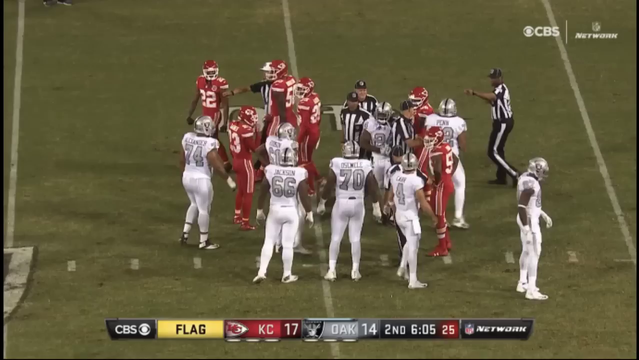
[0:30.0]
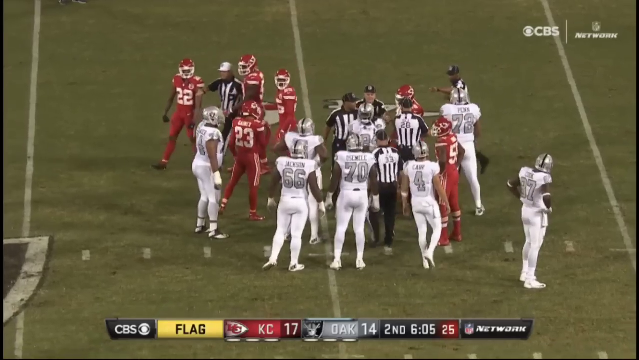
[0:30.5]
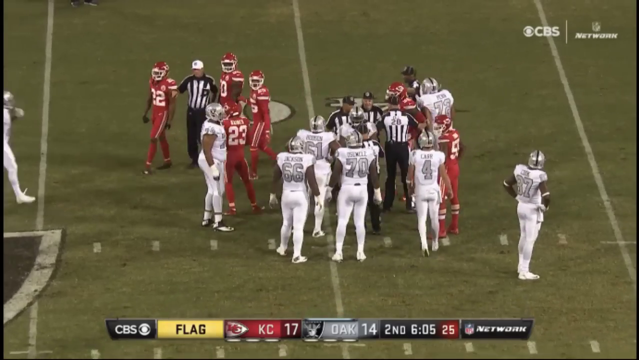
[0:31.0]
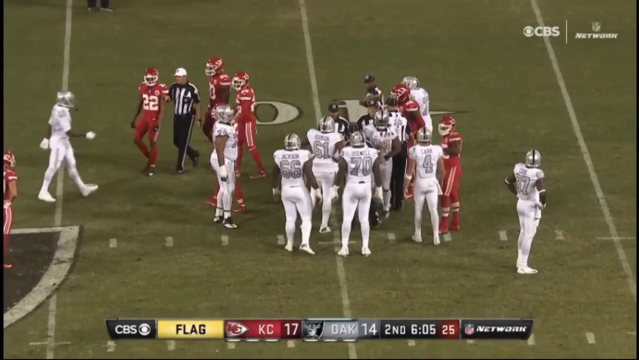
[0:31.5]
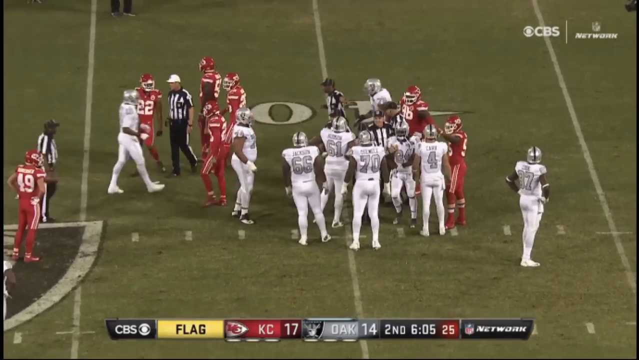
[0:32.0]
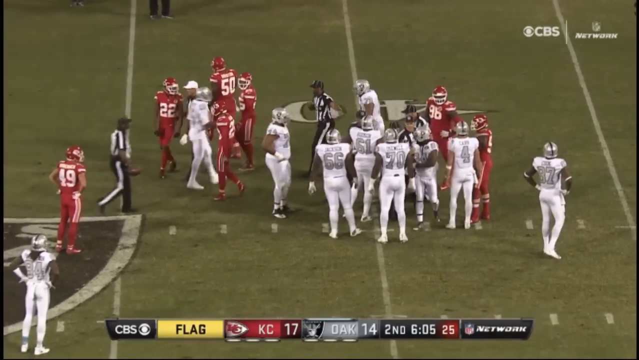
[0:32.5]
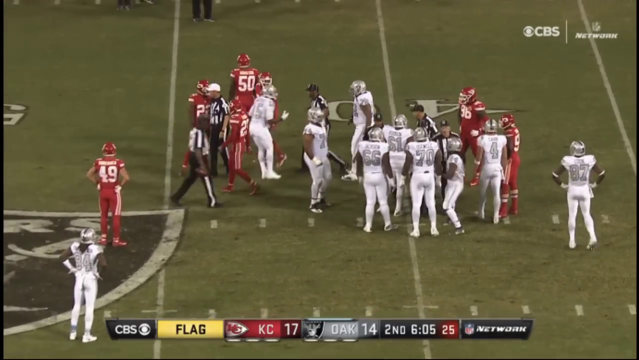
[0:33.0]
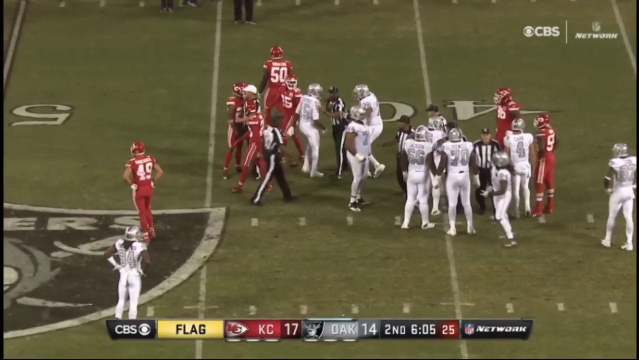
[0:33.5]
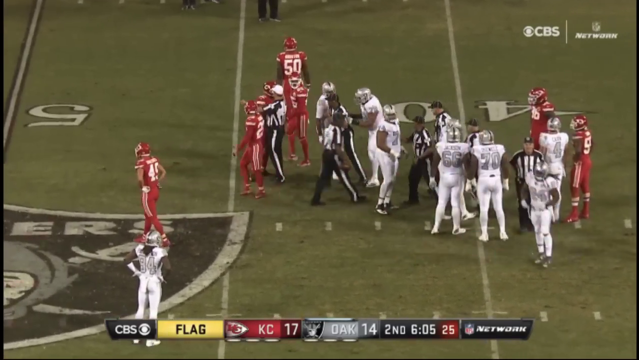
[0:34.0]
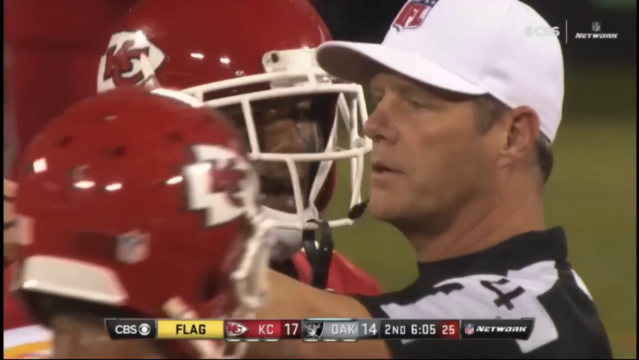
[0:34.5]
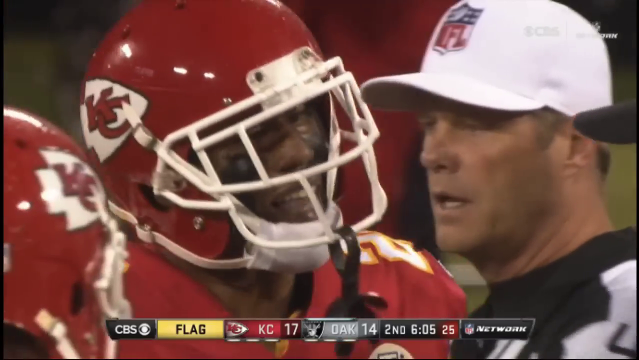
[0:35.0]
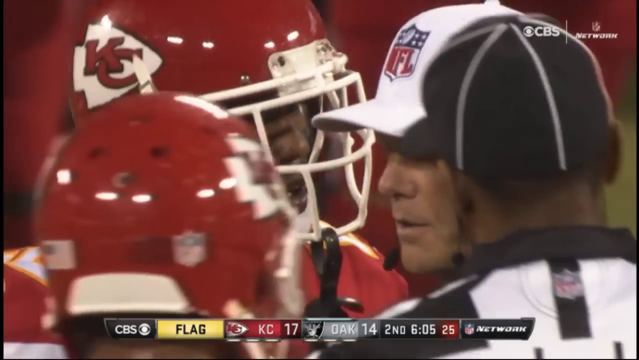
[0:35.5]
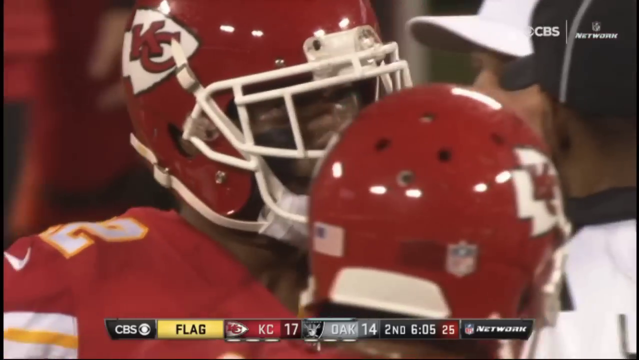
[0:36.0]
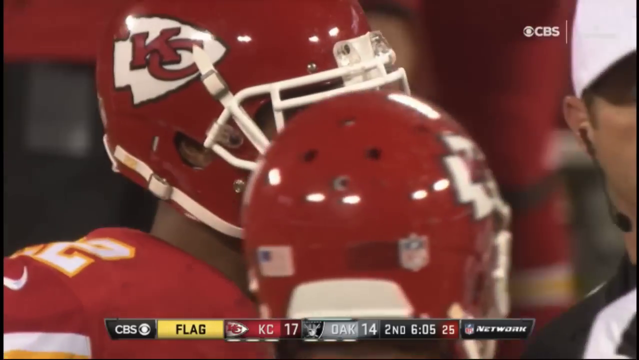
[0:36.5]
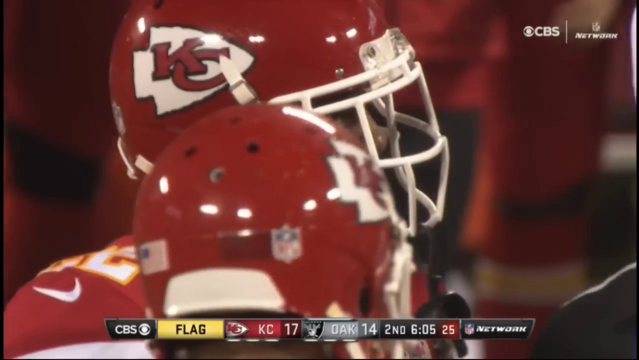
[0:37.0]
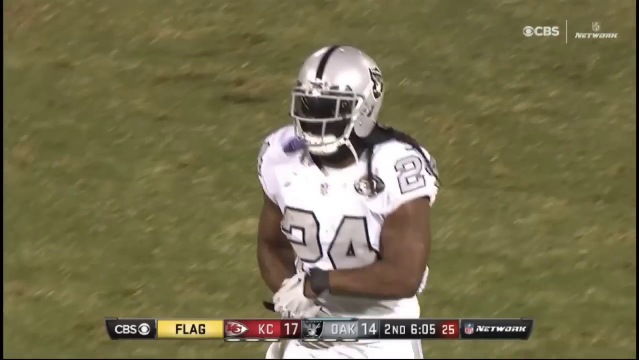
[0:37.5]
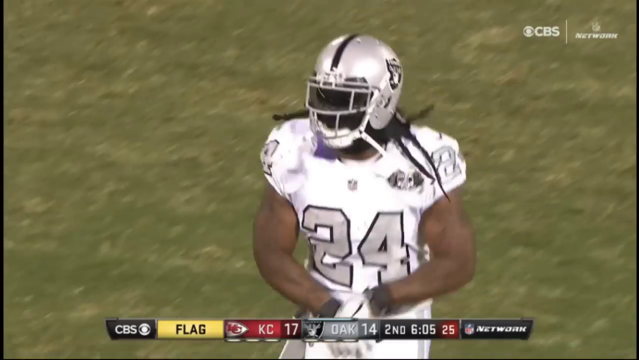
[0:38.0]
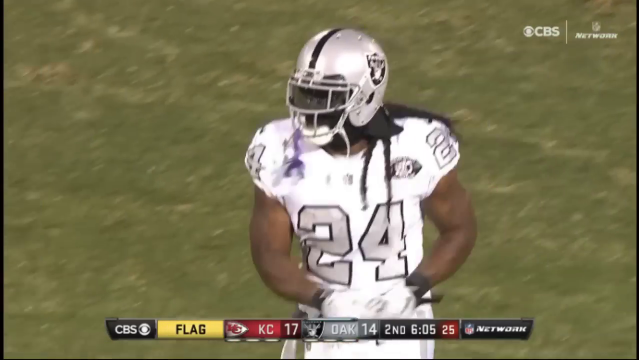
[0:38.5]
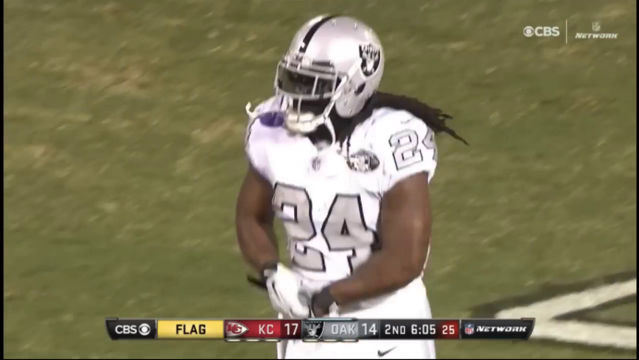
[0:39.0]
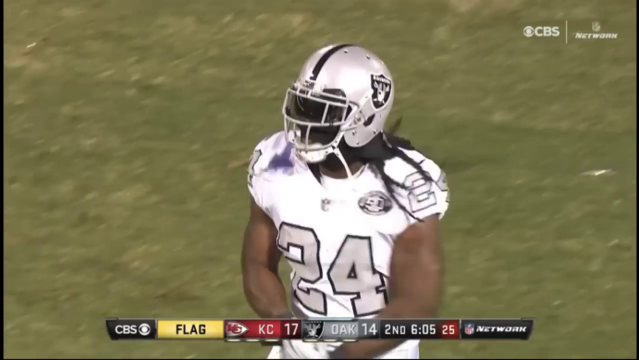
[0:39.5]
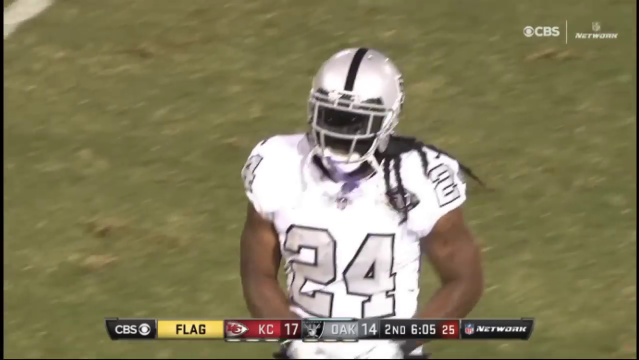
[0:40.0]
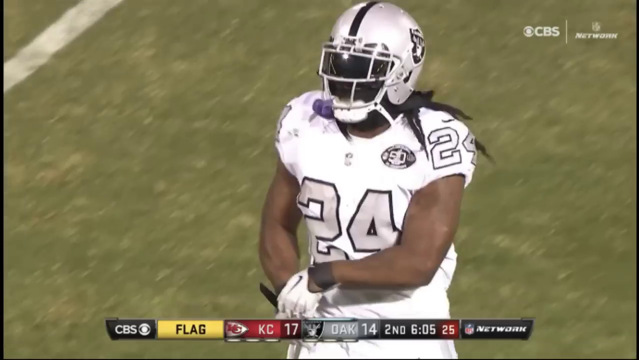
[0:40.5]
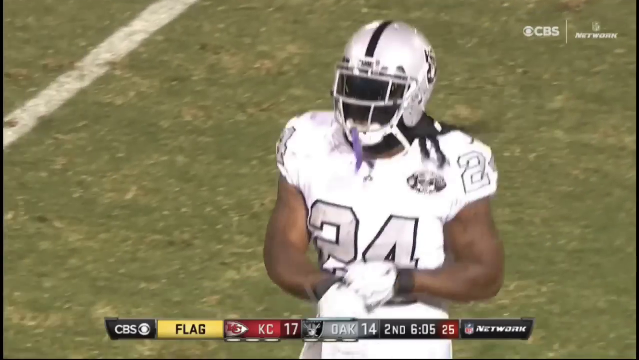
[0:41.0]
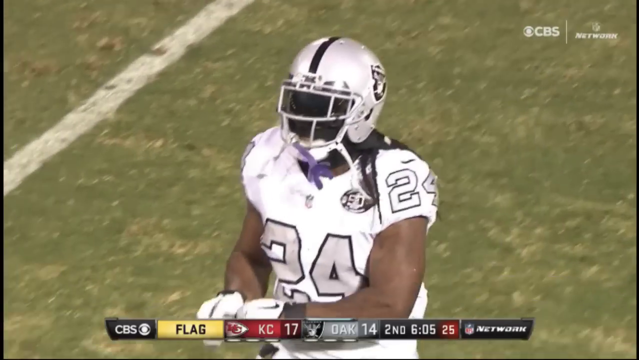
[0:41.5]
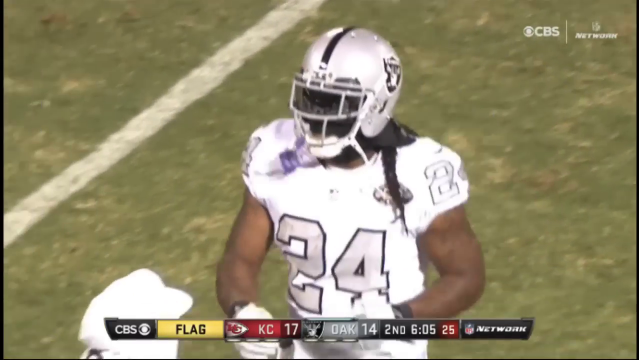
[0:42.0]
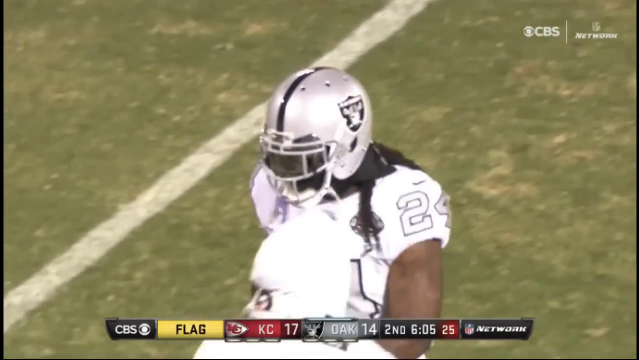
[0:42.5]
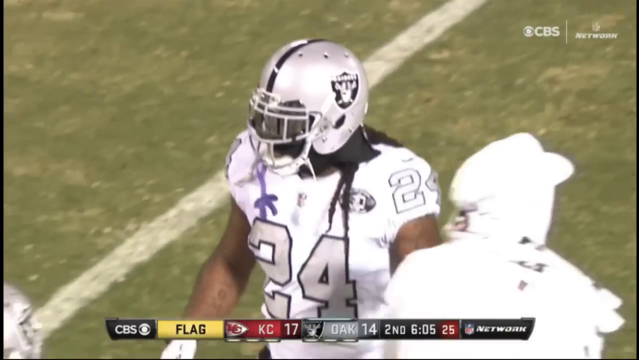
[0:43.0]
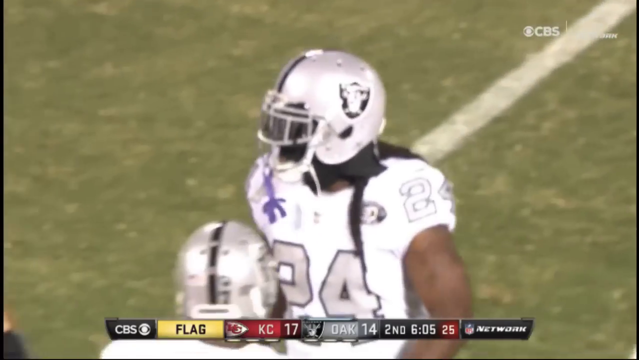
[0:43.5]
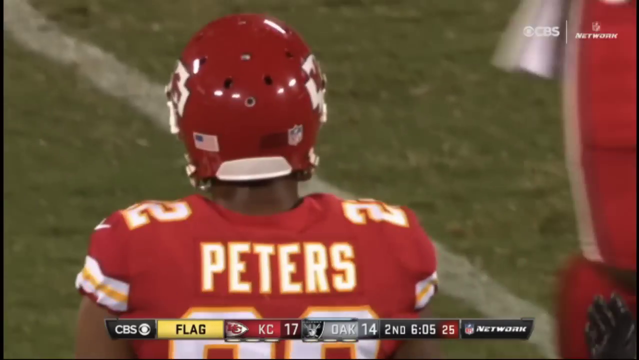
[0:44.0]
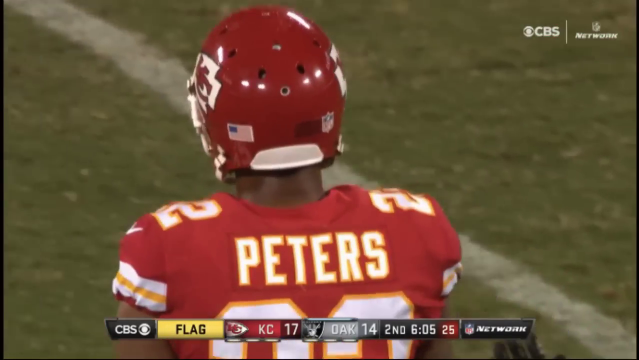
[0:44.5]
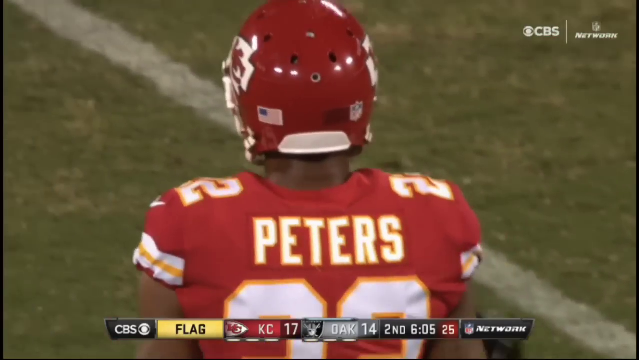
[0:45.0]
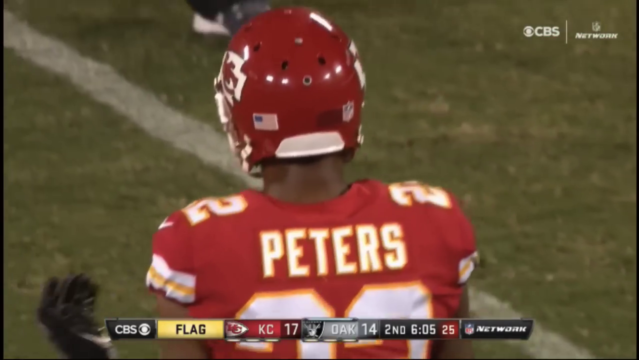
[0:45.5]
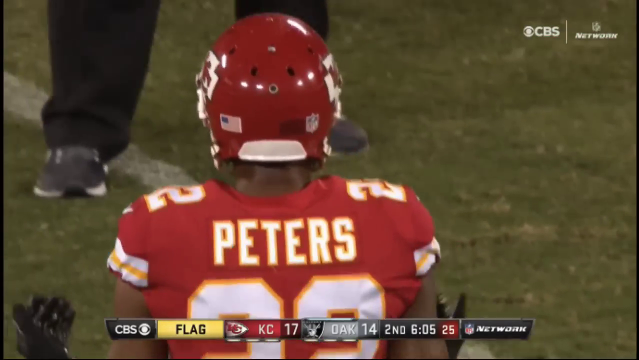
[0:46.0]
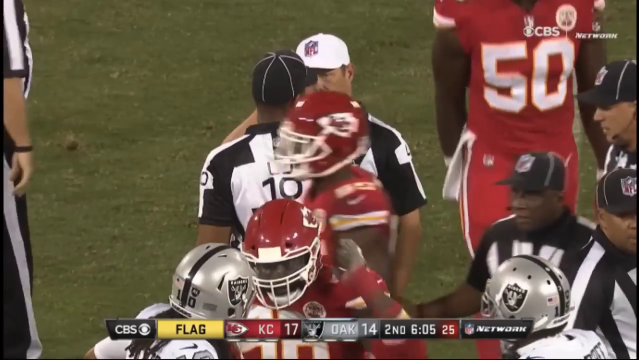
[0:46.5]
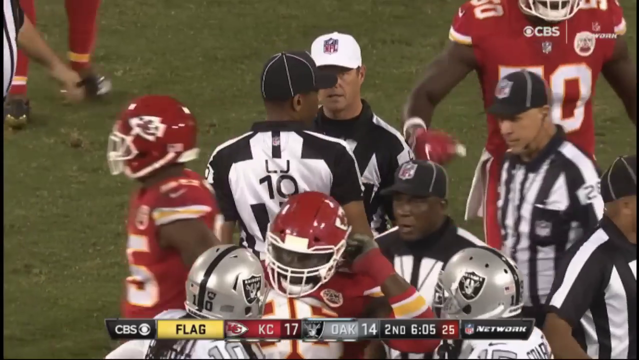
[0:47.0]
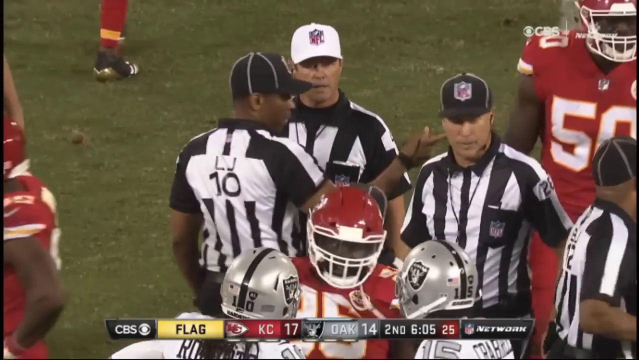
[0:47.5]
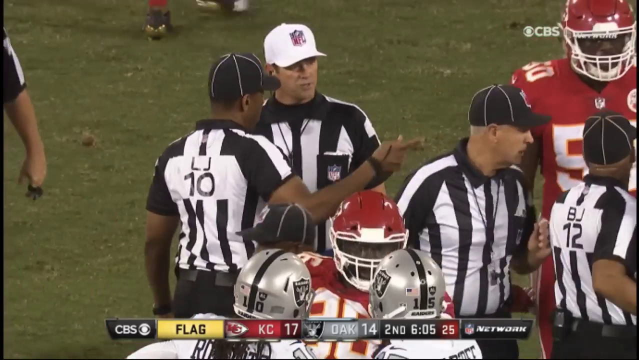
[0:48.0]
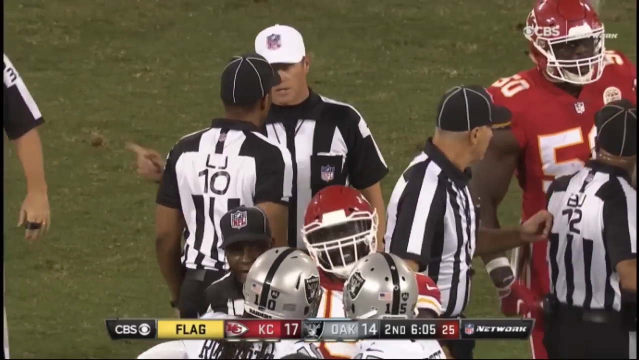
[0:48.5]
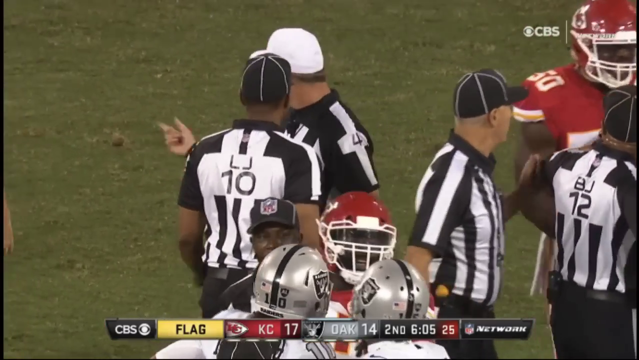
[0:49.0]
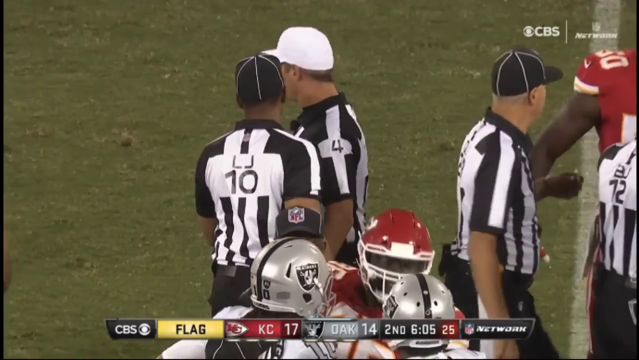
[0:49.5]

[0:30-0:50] The video is titled Marshawn Lynch Gets Ejected for Grabbing a Referee, Chiefs vs. Raiders NFL. A traditional football play ends in an altercation between several Chiefs and Raiders players. The referees get involved, and Marshawn Lynch grabs at one of the referees. That referee throws up a yellow flag while several other referees come in to discuss the play. As number 24 of the Raiders leaves the field, more referees discuss the altercation. The video goes into a split screen showing the replay of the altercation between the players and number 24's altercation with the referee. The scoreboard along the bottom of the video reads "Kansas City Chiefs 17, Oakland Raiders 14." The split screen shows the referees discussing the play on the left and the altercation on the right. Shots follow of the Oakland Raiders coach and the Kansas City Chiefs coach on the sidelines. A referee walks to the middle of the field, presumably calling the play with hand signals. The Chiefs coach speaks to another referee on the sidelines.